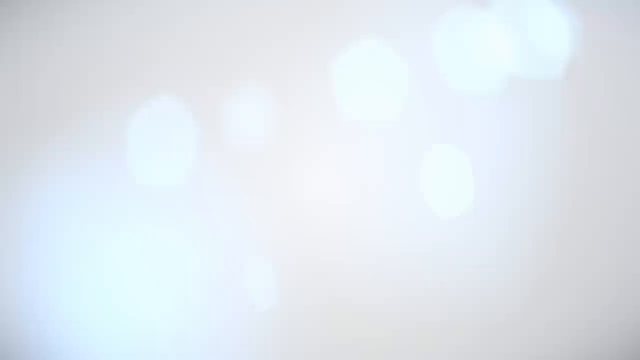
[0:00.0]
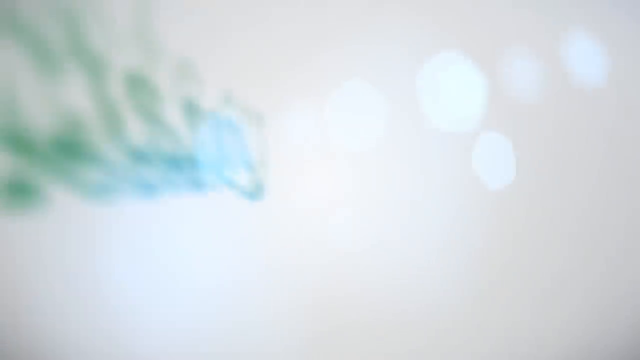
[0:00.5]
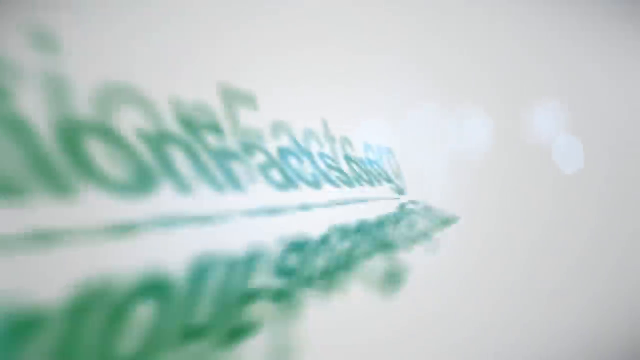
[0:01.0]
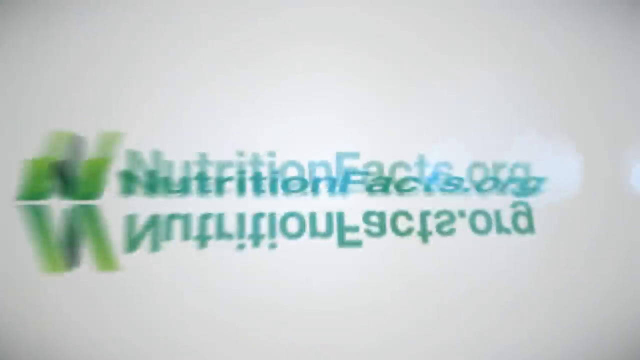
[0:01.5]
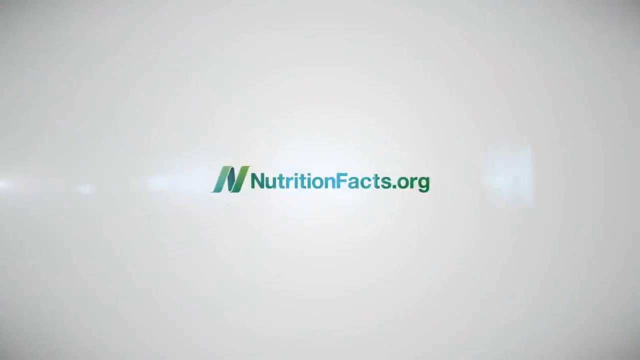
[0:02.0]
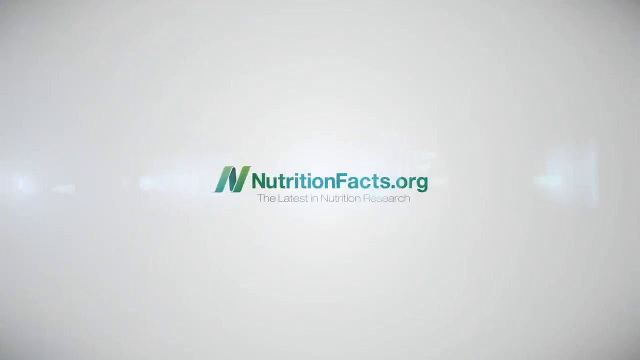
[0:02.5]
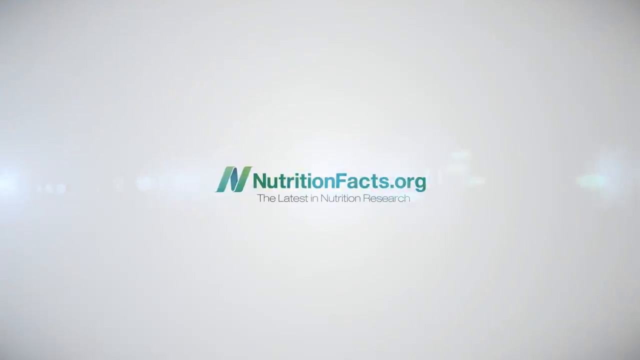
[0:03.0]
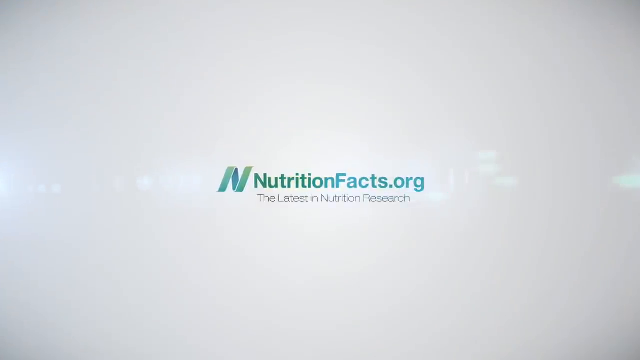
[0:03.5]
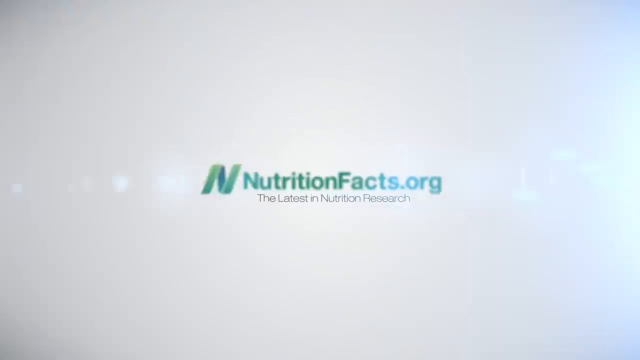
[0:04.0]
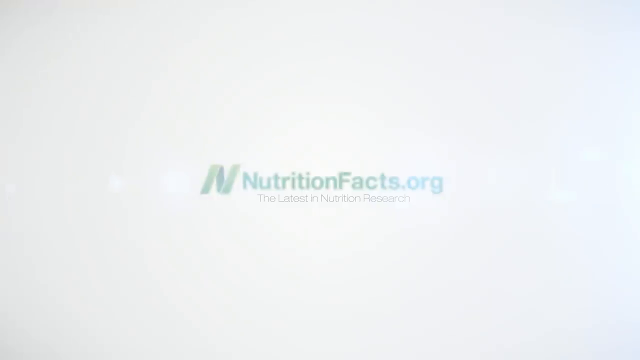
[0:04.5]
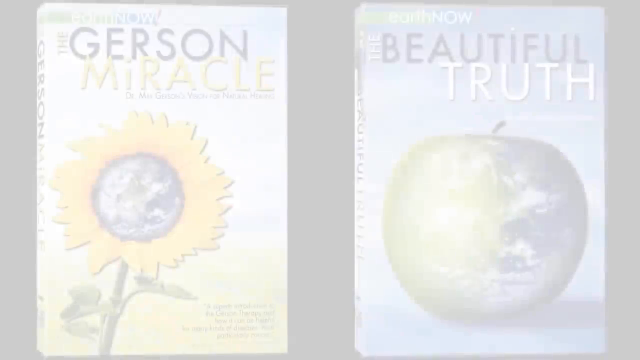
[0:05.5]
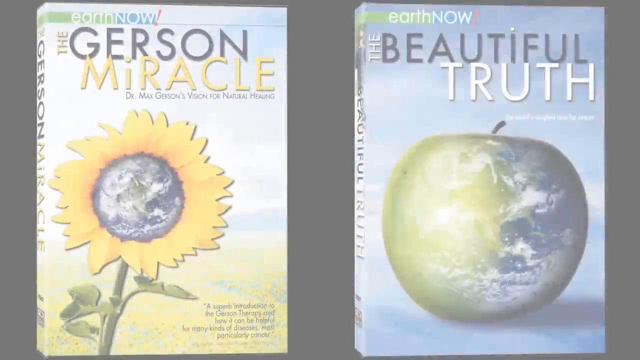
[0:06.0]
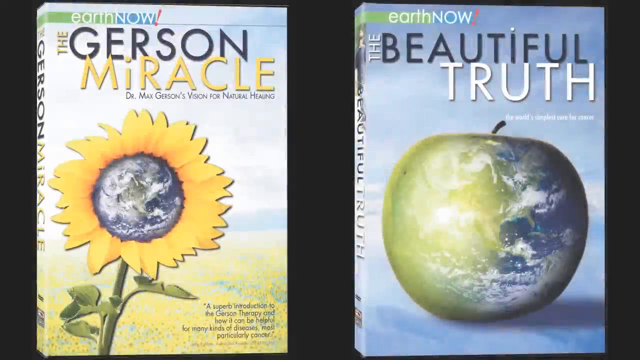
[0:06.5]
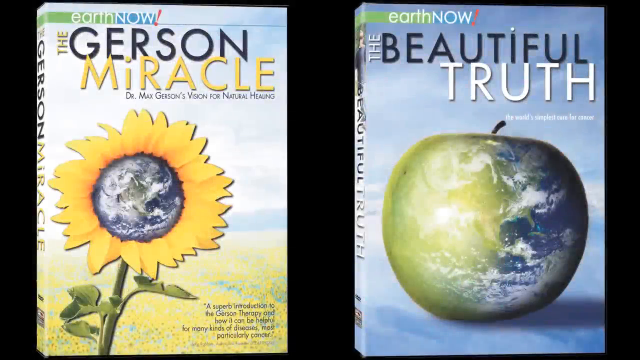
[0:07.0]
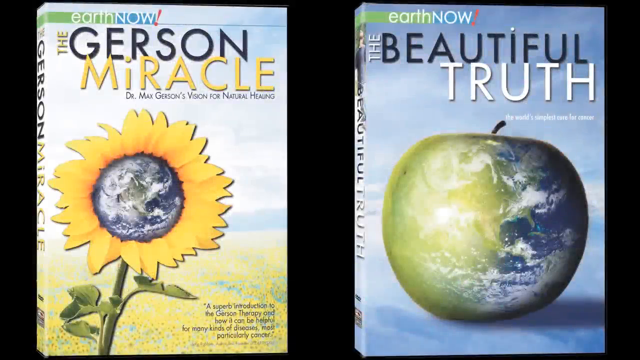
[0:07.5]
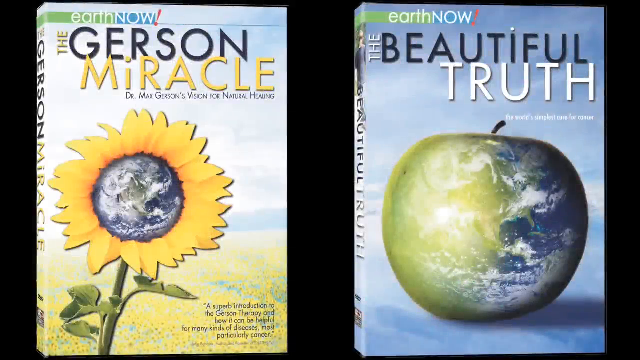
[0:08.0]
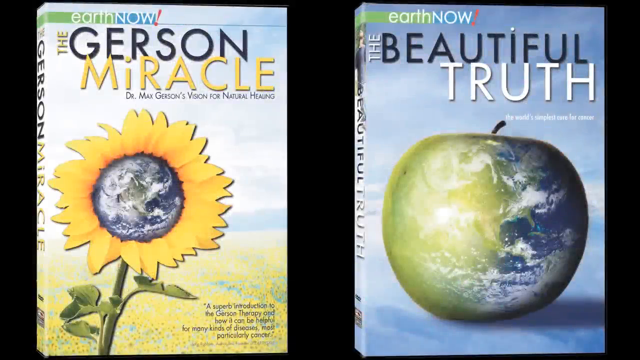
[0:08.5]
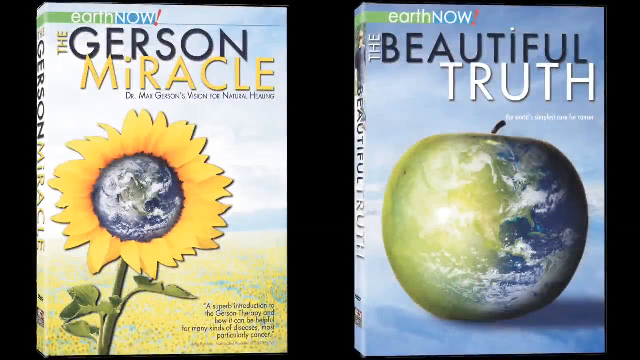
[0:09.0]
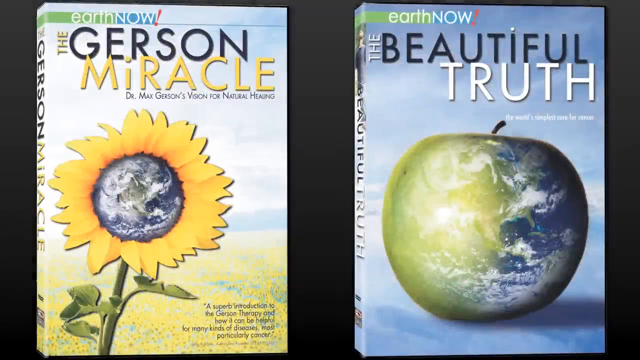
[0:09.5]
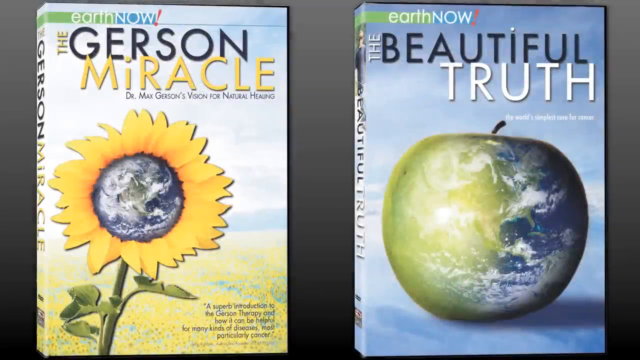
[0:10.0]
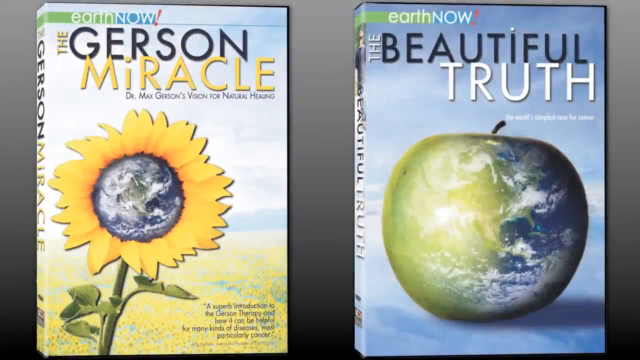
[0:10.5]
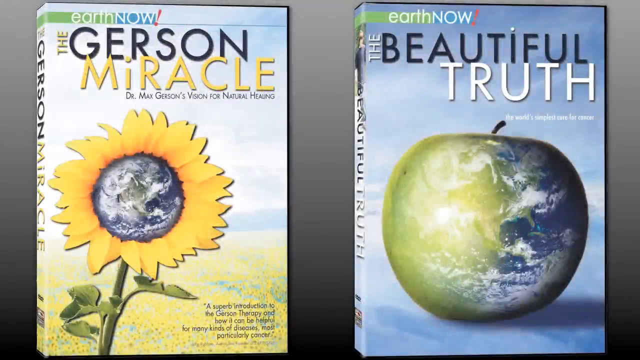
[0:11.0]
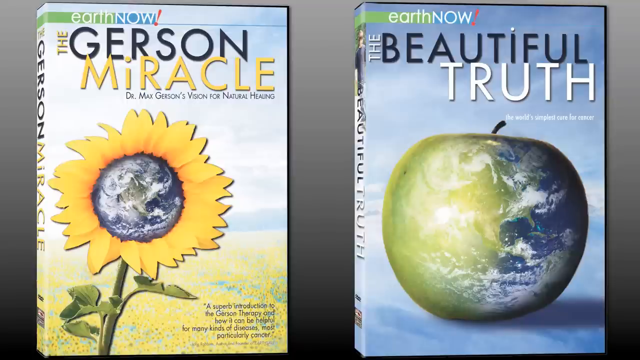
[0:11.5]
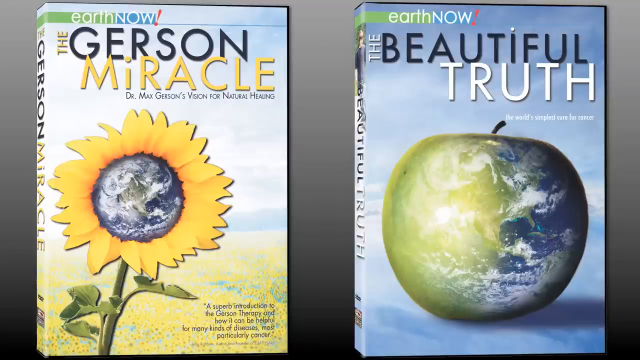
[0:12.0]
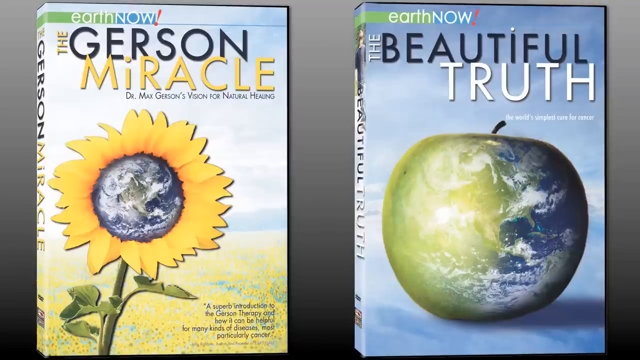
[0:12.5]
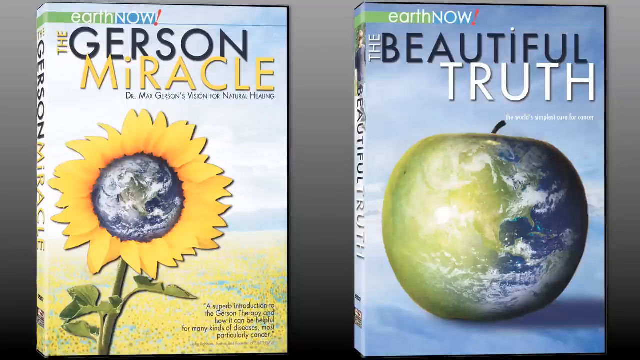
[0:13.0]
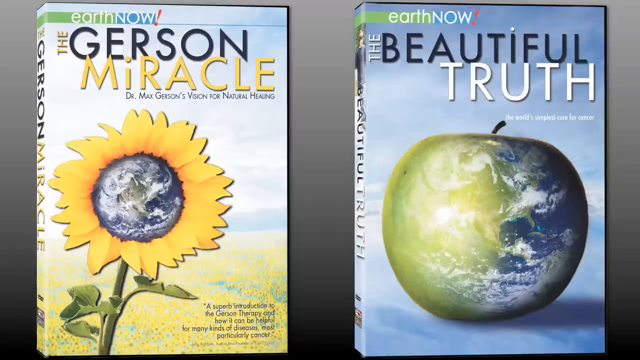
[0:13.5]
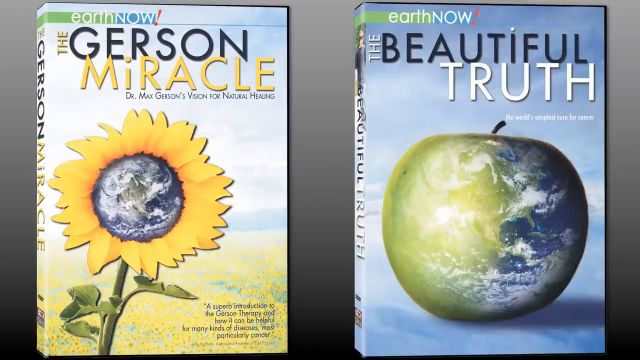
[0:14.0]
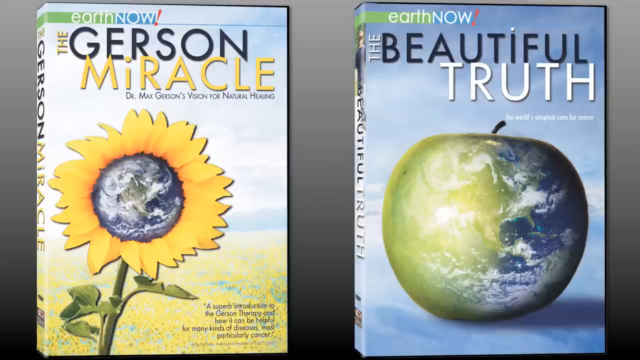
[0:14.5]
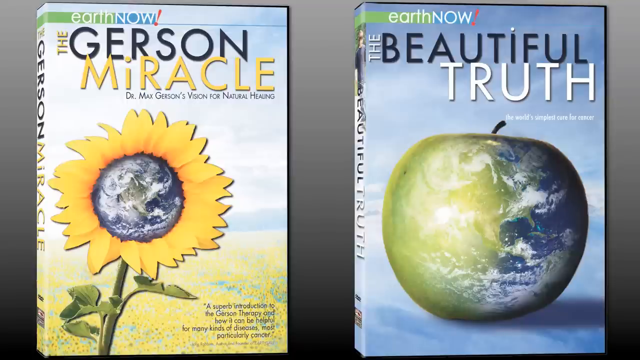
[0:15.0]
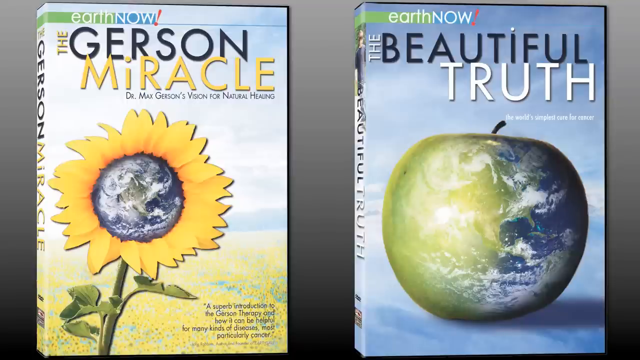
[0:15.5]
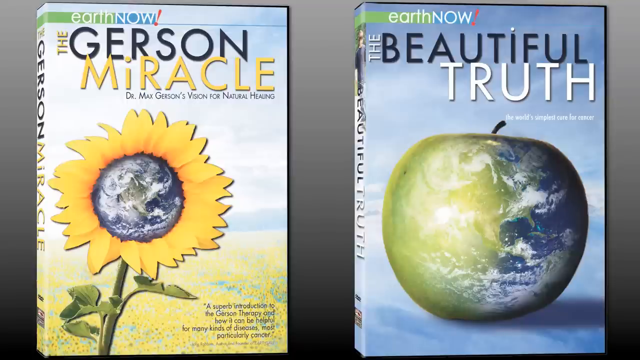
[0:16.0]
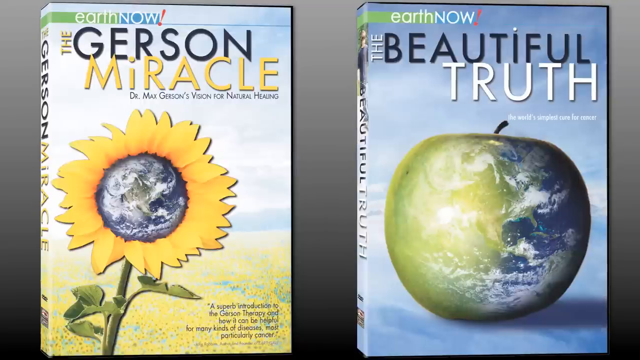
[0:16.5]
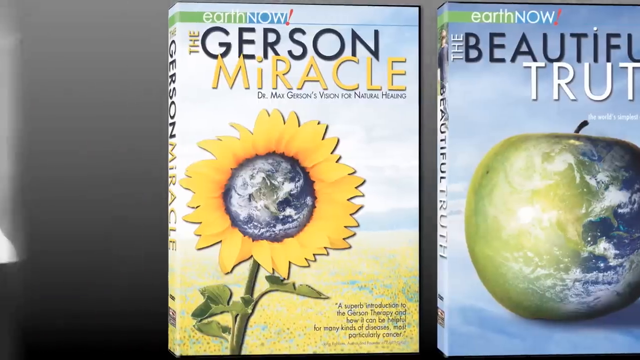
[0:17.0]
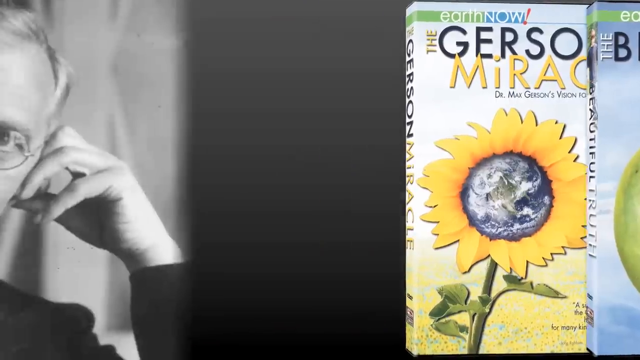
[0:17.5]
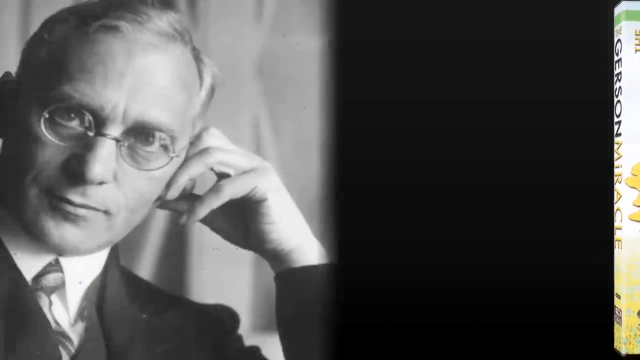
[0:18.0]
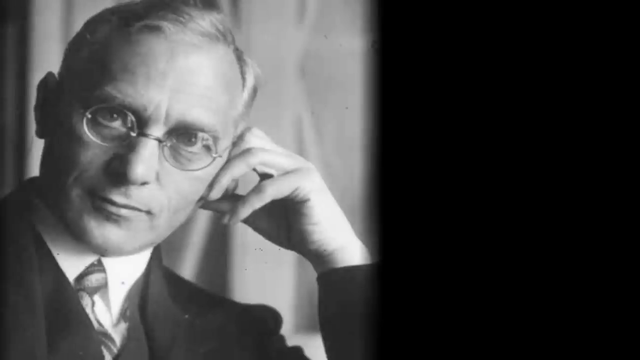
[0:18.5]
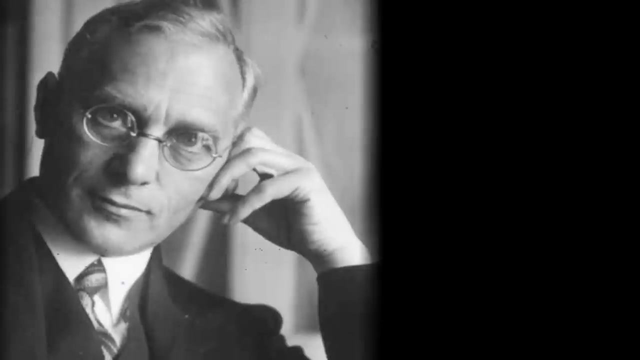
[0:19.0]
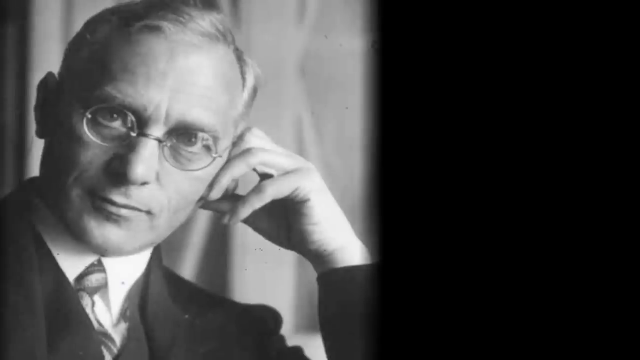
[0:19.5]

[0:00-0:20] The video opens on a screen that is kind of white, and green letters appear. A green N is in the middle of the screen, and to its right is the text "nutritionalfacts.org". The text starts off green, fades to blue, and around the C and the T begins to fade back to green. Below it, "the latest in nutrition research" appears in black letters. The scene then switches to a black screen with two books side by side. The left book reads "Gerson Miracle" and has a picture of a sunflower on it. The book on the right reads "Beautiful Truth" and has a picture of an apple that kind of has a world map on it, with clouds and oceans; it looks like the world, but in the shape of an apple, with the United States, or North America, visible on it. The two books pan to the right, and a black-and-white image of a man appears on the left side of the screen while the right side is completely black. He is sort of angled towards the right side of the screen, with his face facing the screen. He is a Caucasian man wearing round glasses. His left hand is up to the left side of his head, his fingers bent and his knuckles sort of touching his head, with his pinky straight. The screen then goes white.